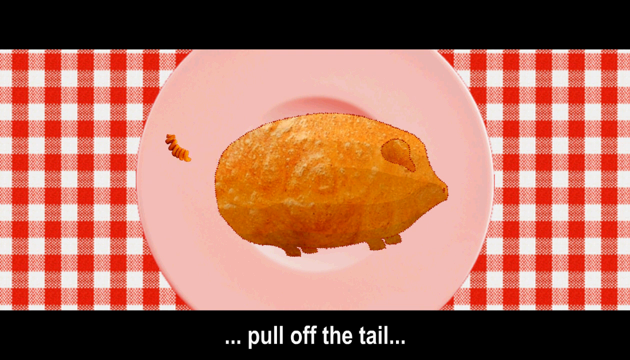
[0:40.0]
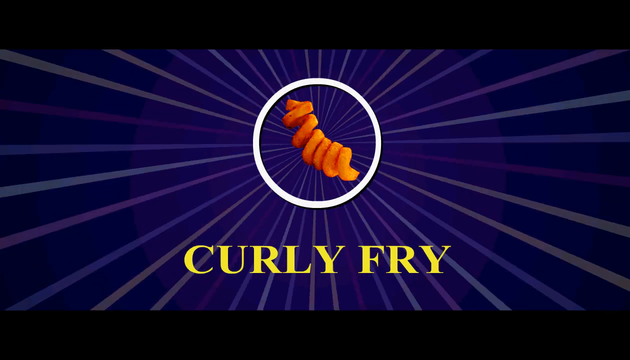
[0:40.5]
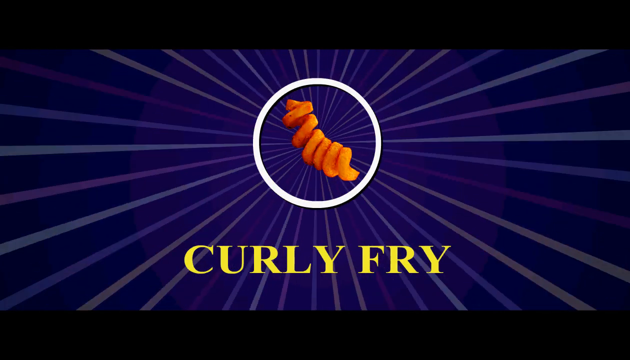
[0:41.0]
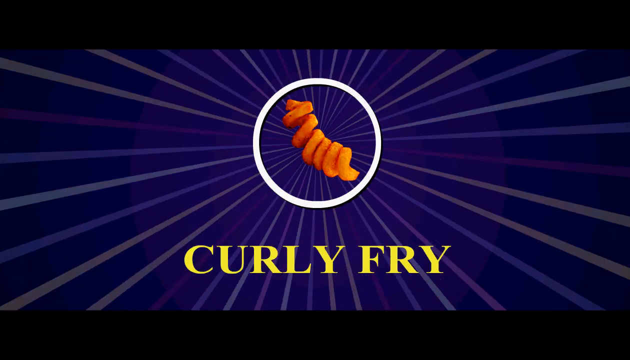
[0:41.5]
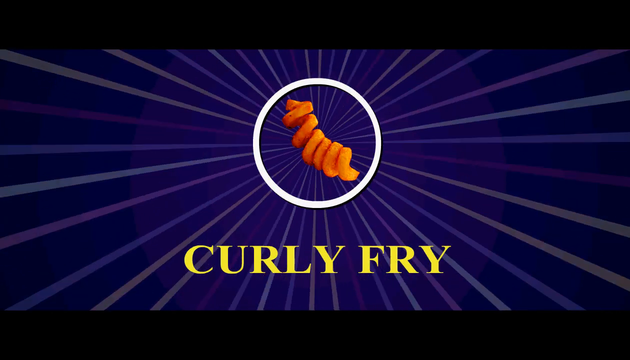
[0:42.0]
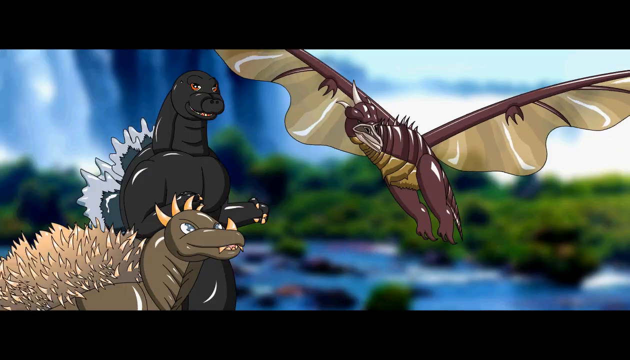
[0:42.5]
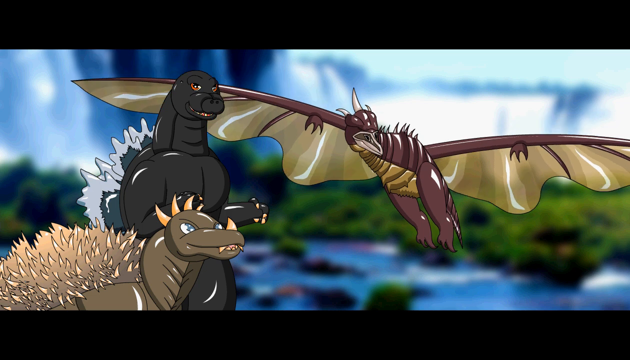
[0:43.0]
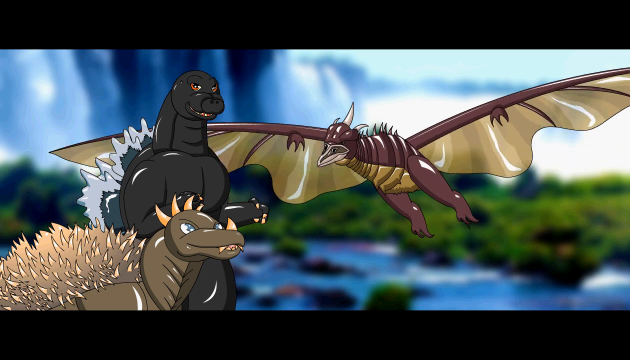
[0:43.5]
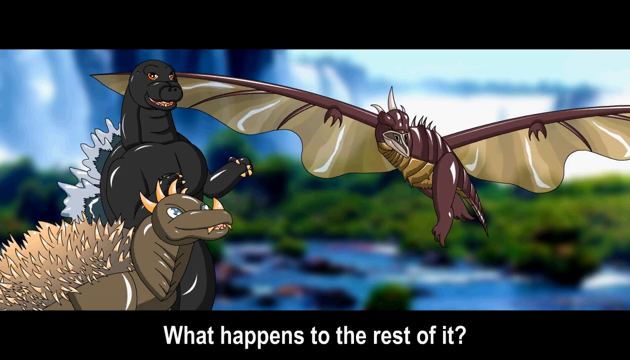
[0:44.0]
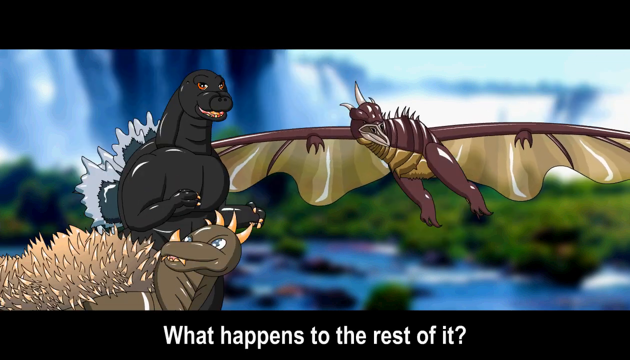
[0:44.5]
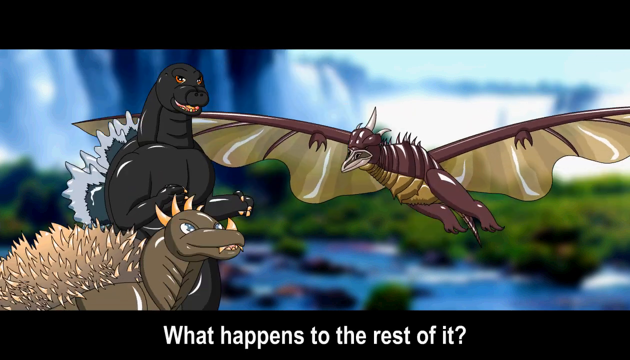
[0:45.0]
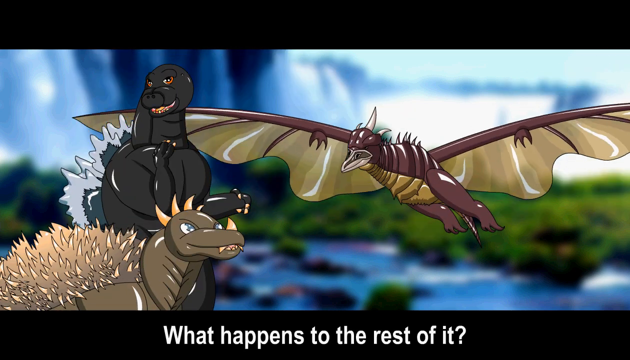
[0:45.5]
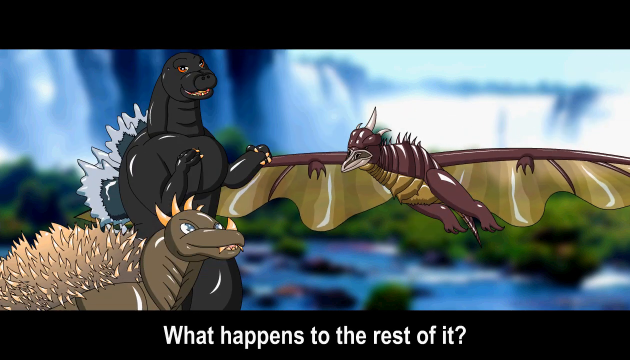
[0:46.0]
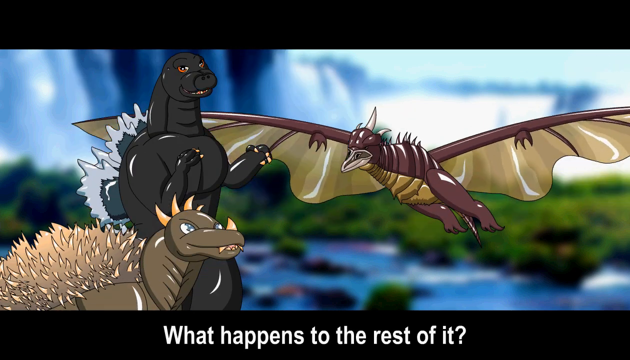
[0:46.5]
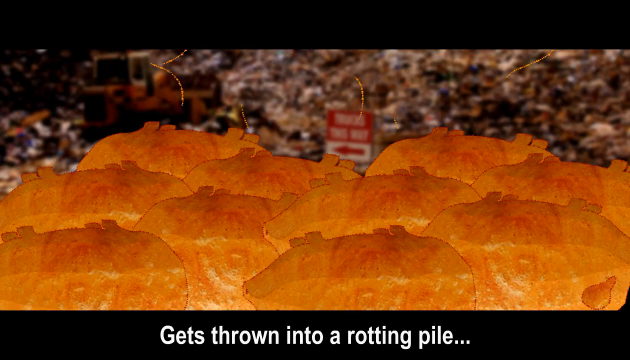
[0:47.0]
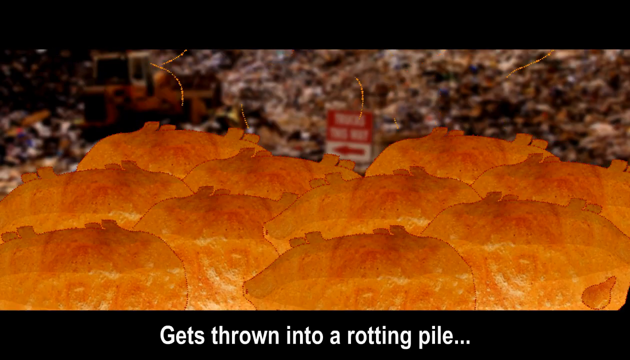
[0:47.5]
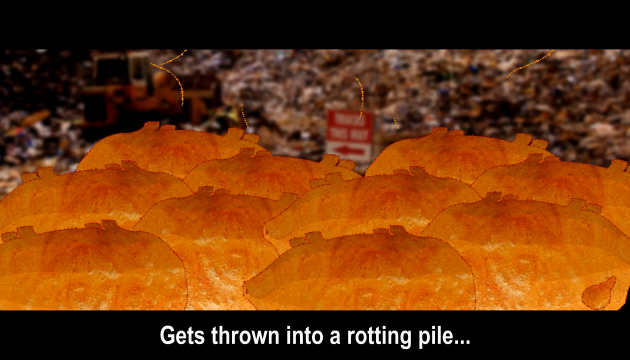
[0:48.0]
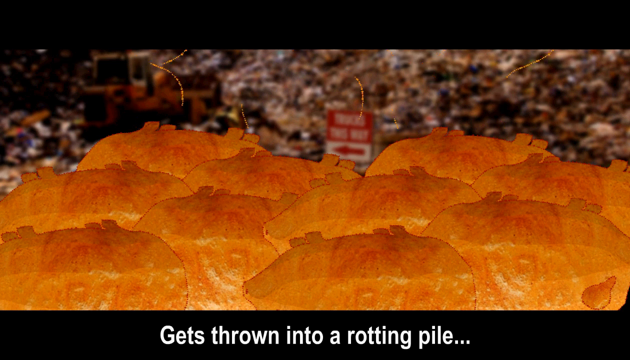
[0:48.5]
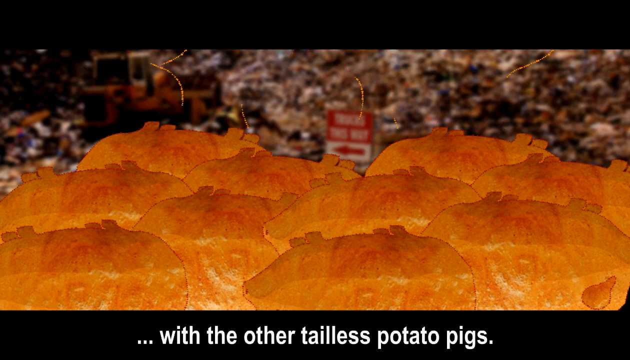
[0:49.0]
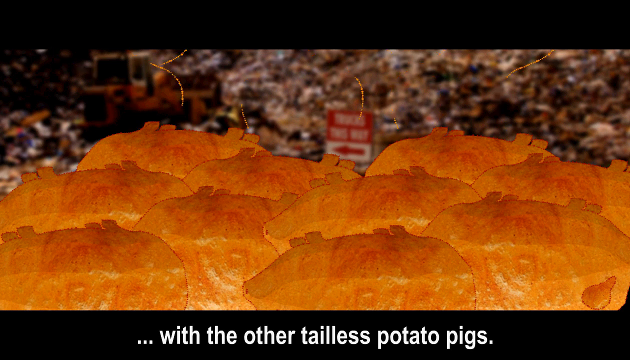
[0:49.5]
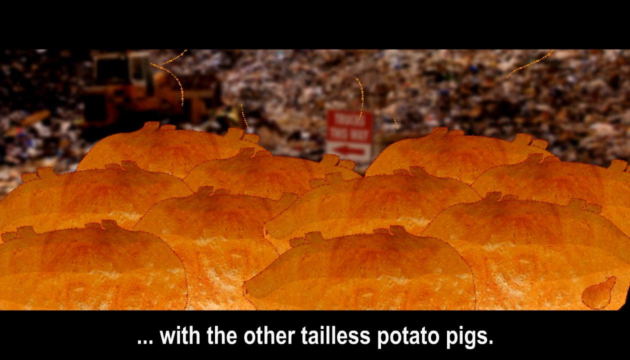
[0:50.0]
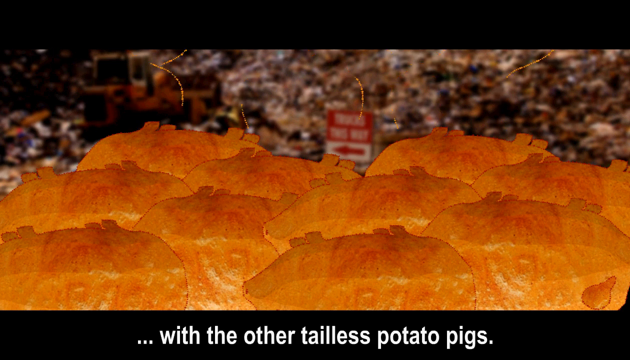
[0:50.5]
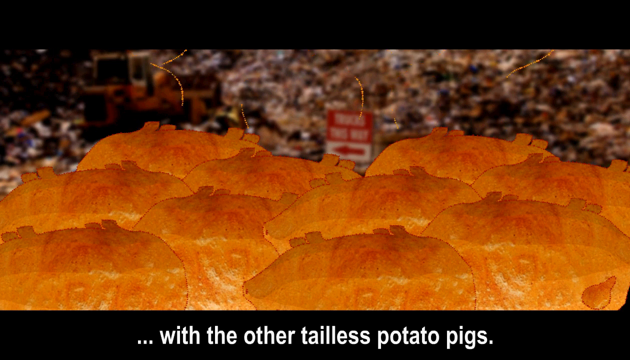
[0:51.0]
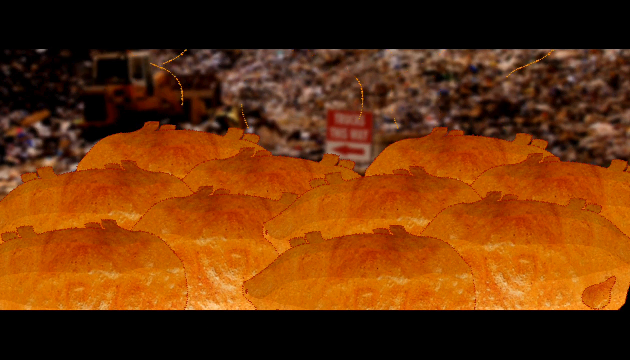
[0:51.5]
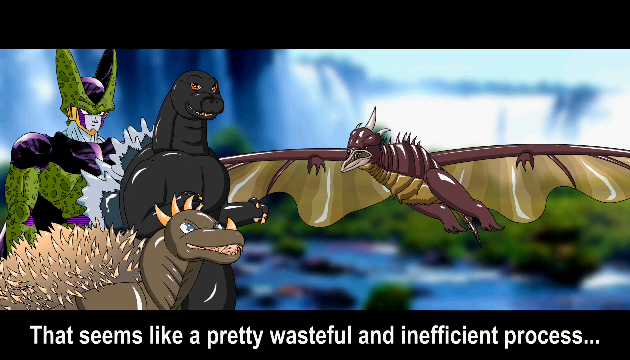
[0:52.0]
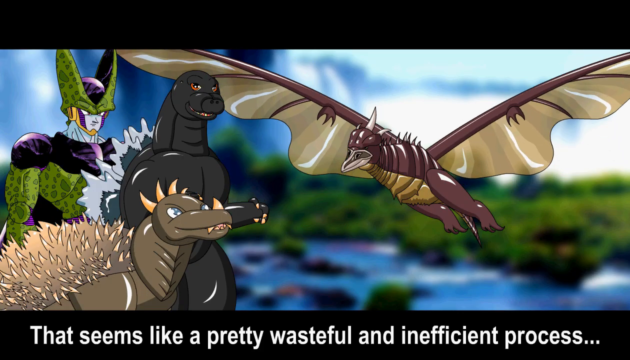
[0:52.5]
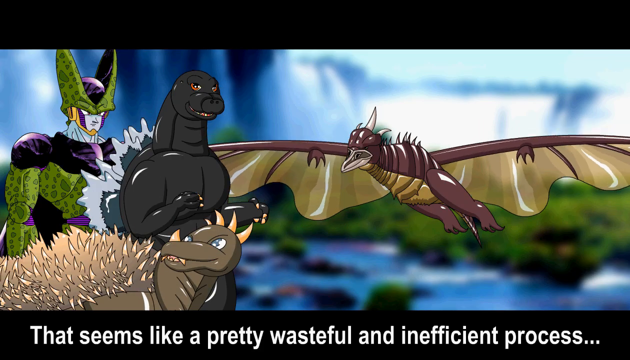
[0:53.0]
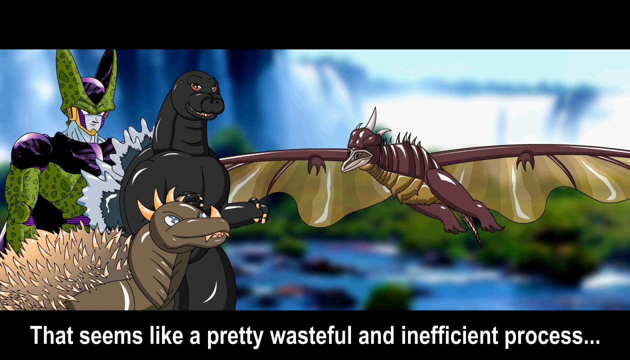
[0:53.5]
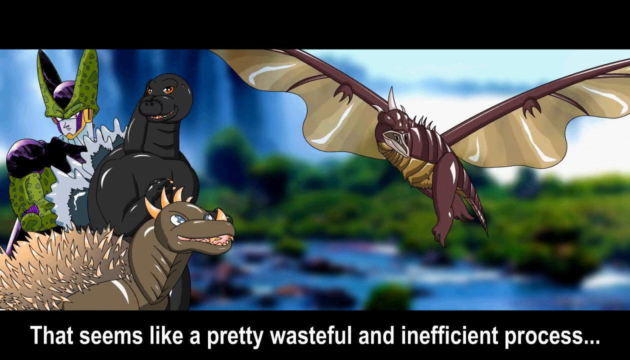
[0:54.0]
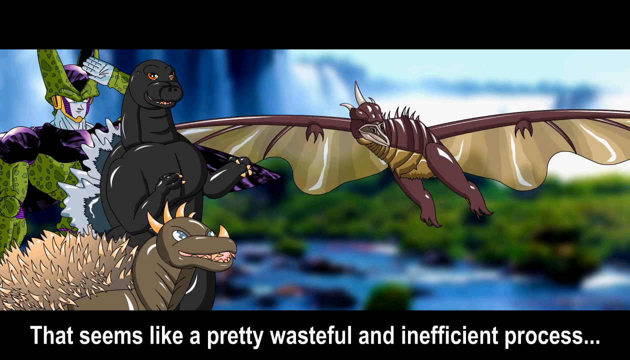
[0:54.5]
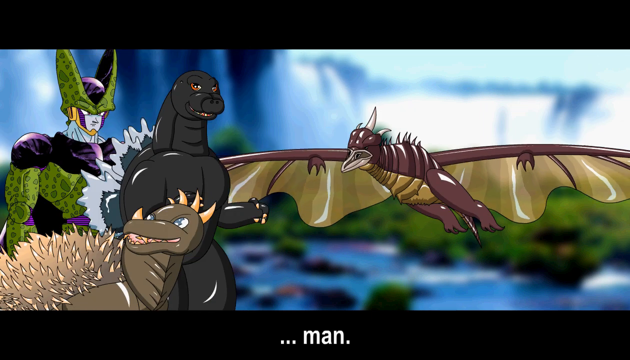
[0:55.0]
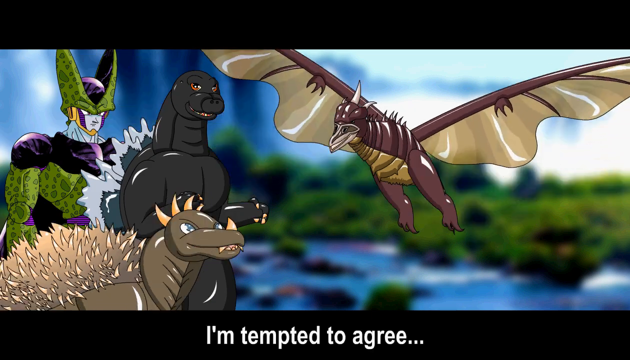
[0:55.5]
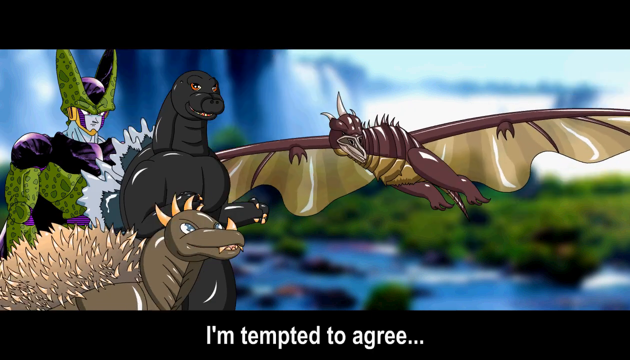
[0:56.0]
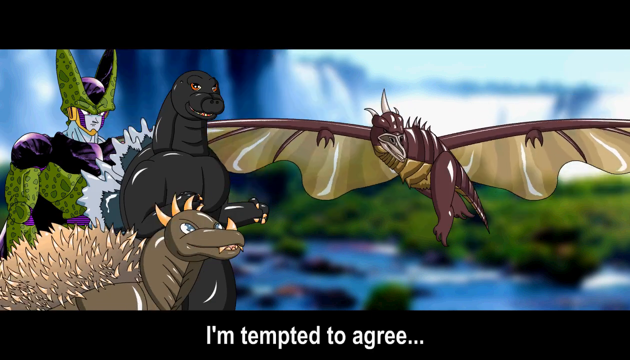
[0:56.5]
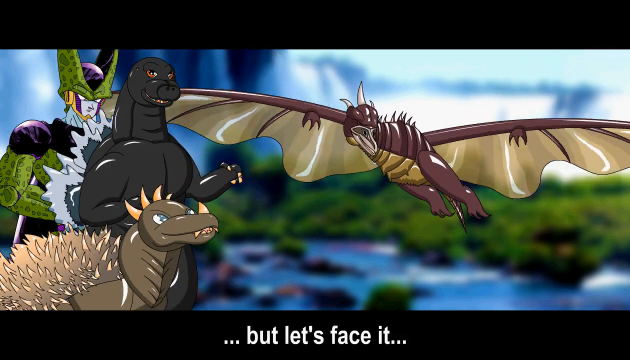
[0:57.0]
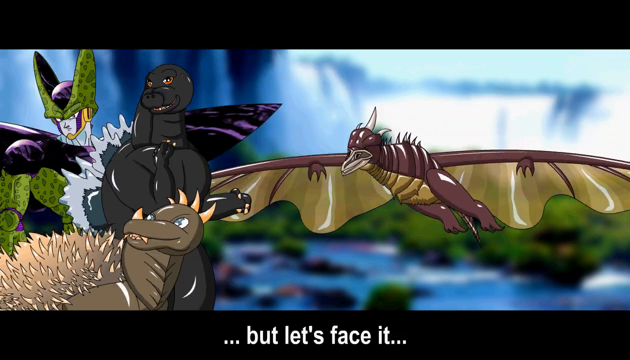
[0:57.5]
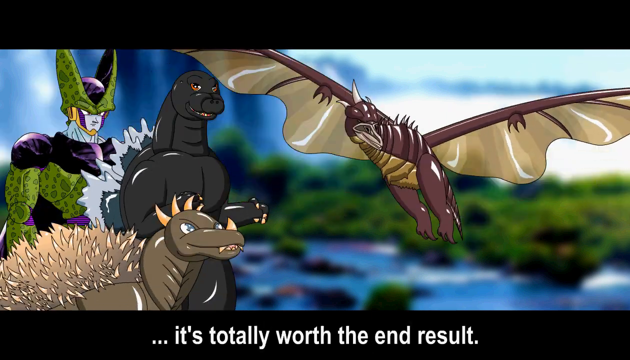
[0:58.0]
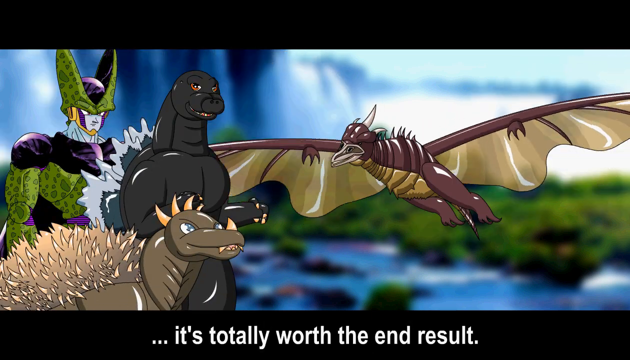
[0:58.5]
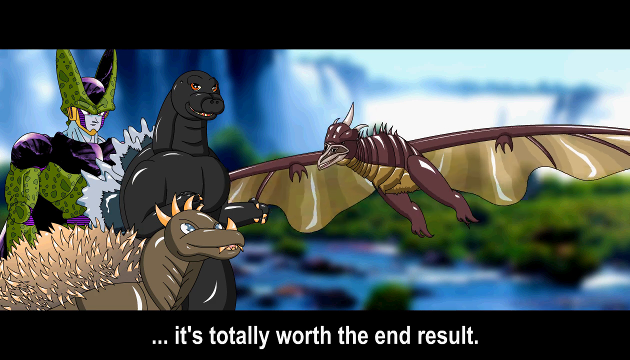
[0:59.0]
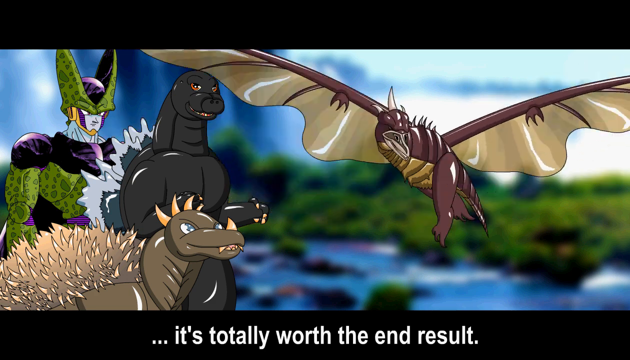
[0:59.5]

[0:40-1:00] A brief transition screen, similar to the one that presented the kanji at the beginning, shows the outline of a curly fry encircled by the same white circle. The video then returns to the three dinosaurs talking about curly fries. One dinosaur asks, in visible text, "what happens to the rest of it?" The scene changes to what seems to be a group of deep-fried potatoes in the form of piggies, and one of the dinosaurs answers that it gets thrown into a rotting pile with the other tailless potato pigs. Back with the dinosaurs in front of the falls, text appears as another dinosaur's answer: "that seems like a pretty wasteful and inefficient process." The flying dinosaur says, "I am tempted to agree but let's face it, the result is totally worth the end result." When the view returns to the dinosaurs in front of the waterfall, a new character from the Dragon Ball anime has been added.